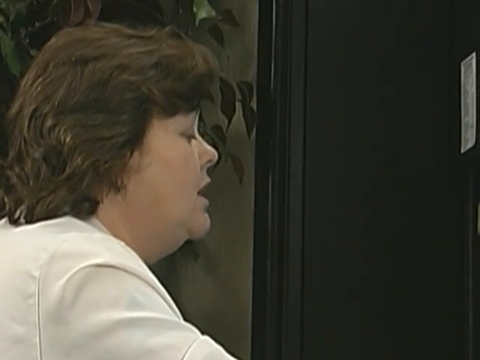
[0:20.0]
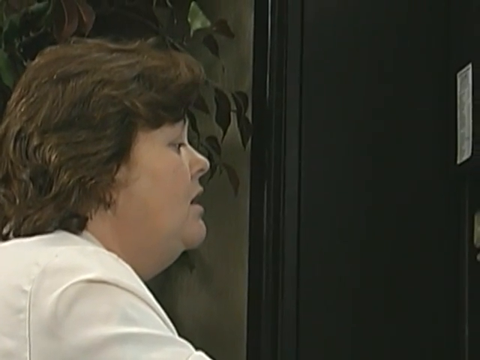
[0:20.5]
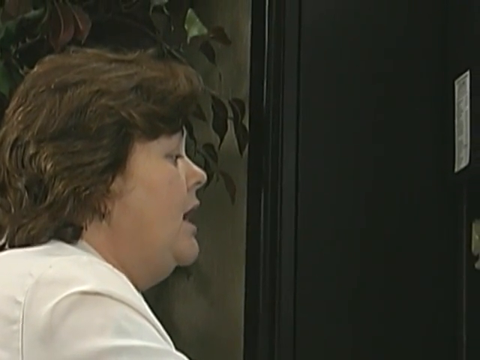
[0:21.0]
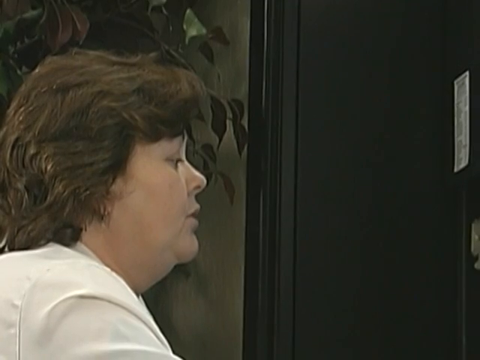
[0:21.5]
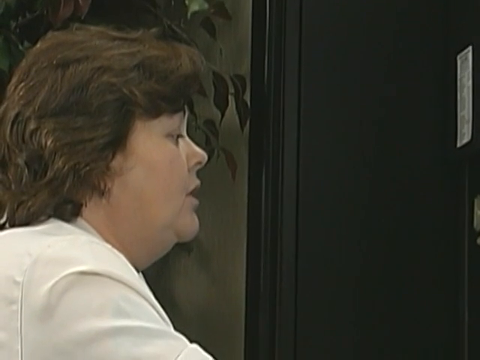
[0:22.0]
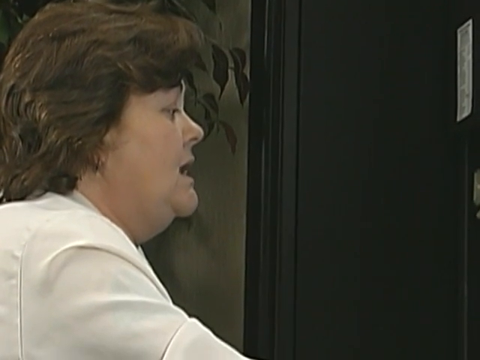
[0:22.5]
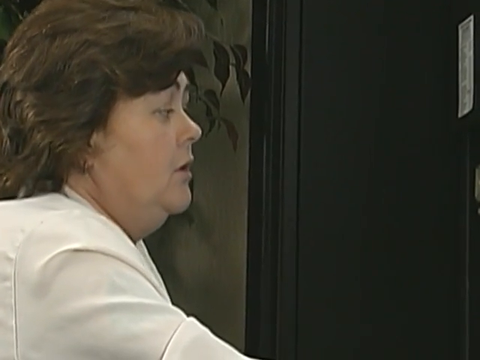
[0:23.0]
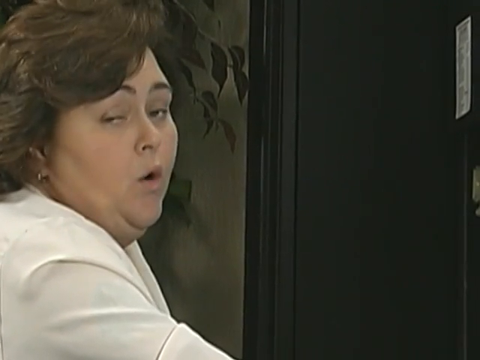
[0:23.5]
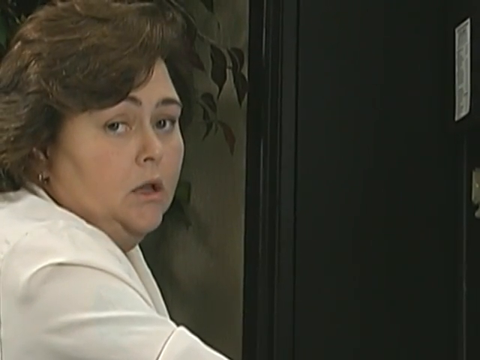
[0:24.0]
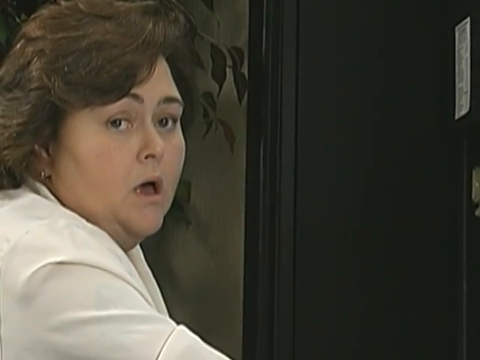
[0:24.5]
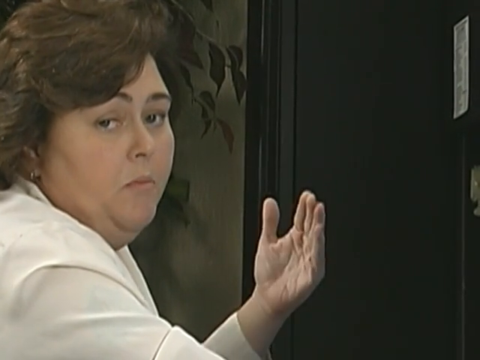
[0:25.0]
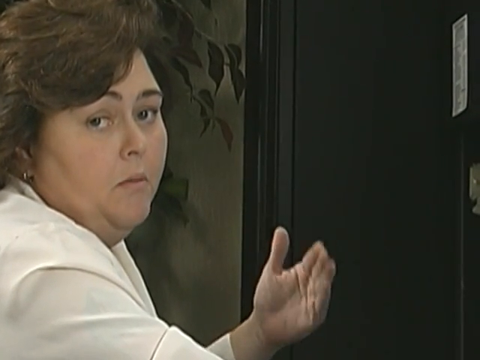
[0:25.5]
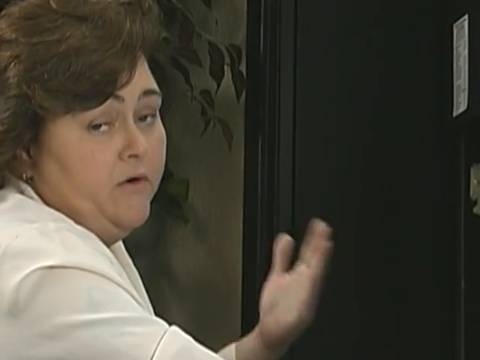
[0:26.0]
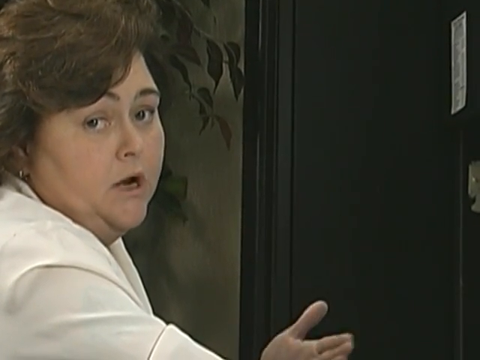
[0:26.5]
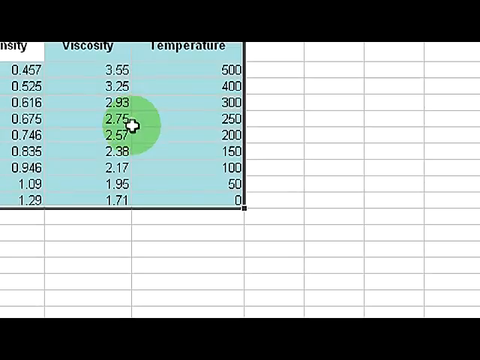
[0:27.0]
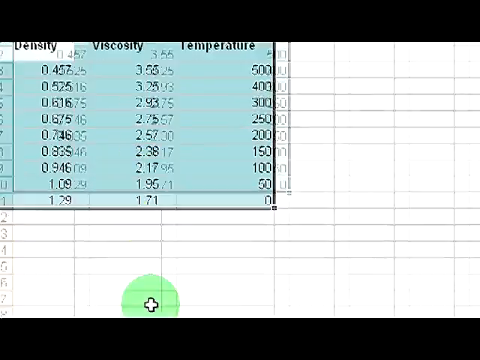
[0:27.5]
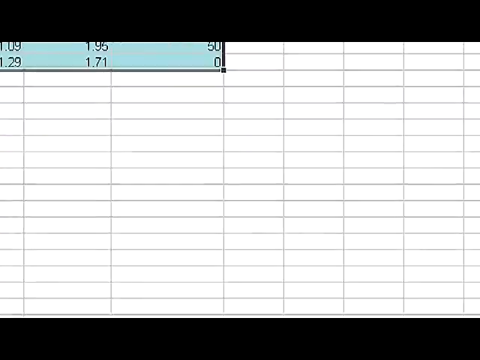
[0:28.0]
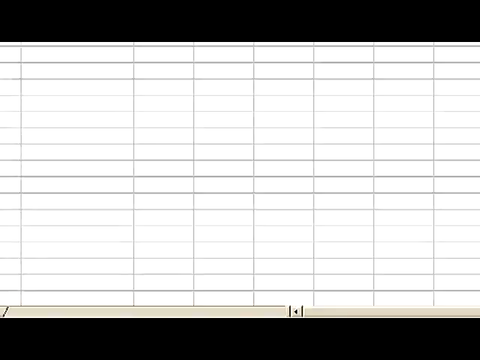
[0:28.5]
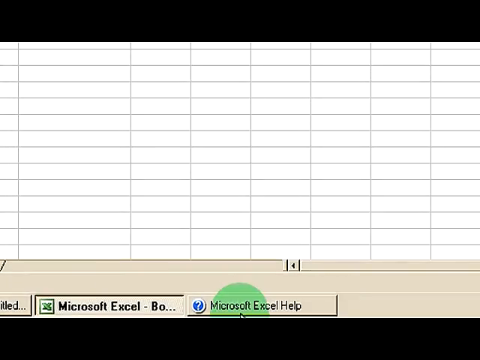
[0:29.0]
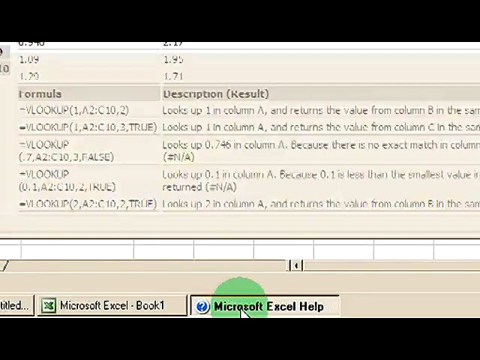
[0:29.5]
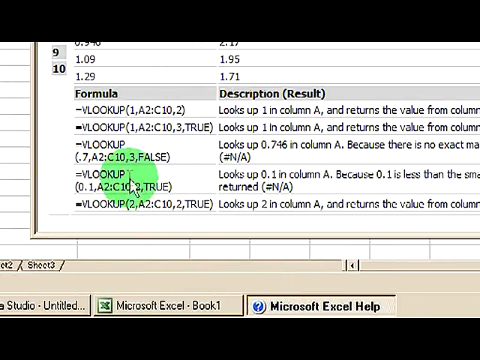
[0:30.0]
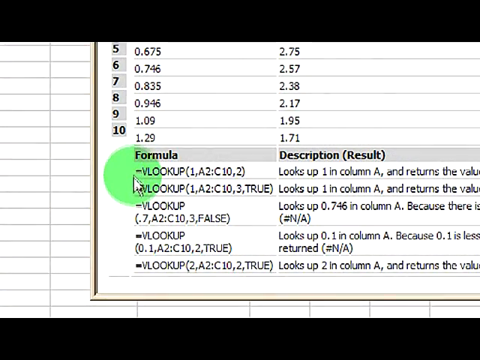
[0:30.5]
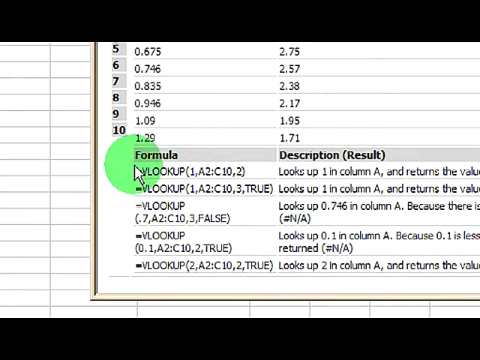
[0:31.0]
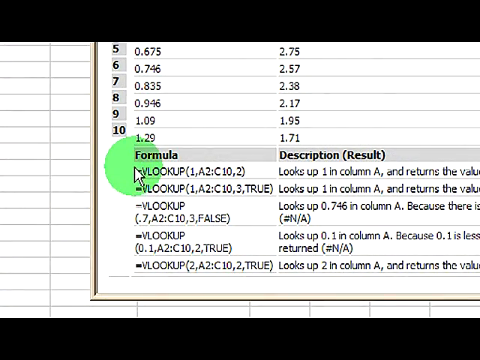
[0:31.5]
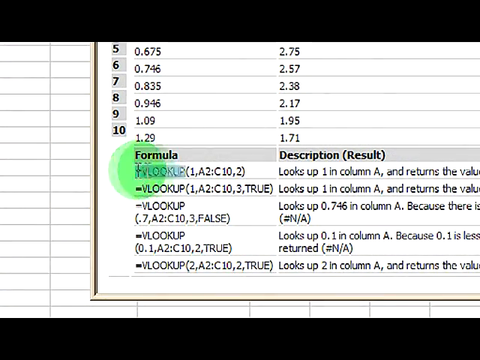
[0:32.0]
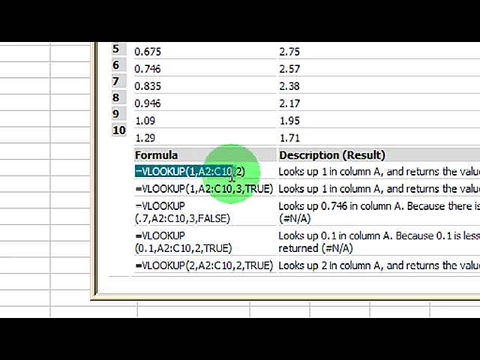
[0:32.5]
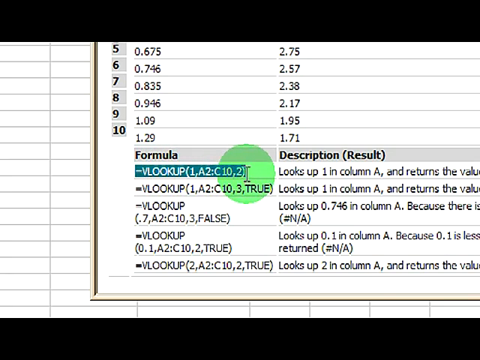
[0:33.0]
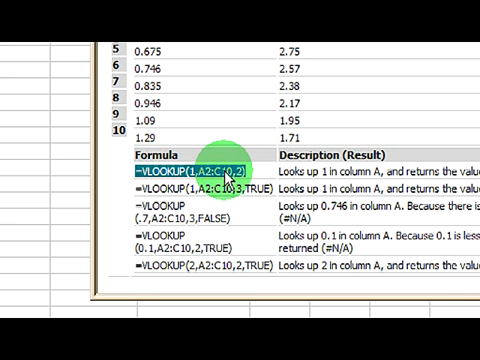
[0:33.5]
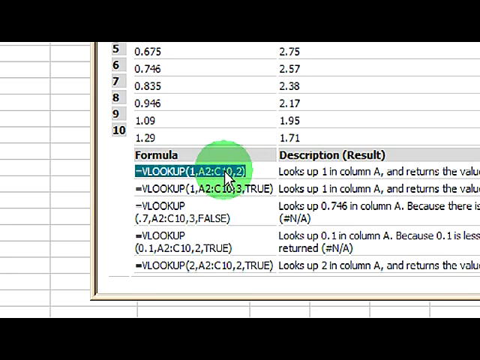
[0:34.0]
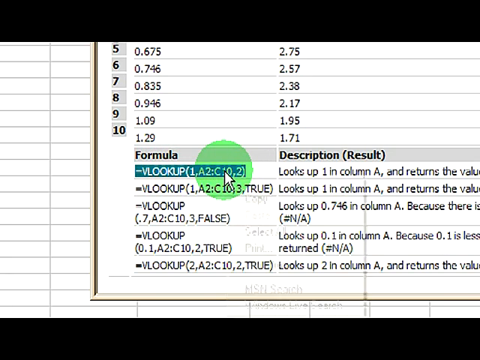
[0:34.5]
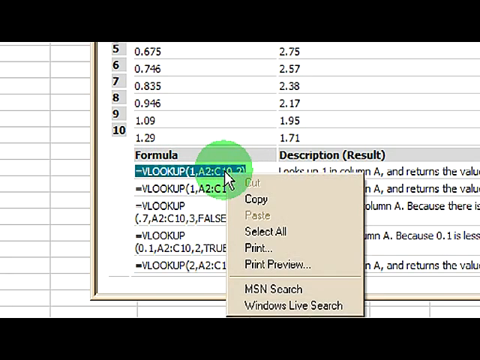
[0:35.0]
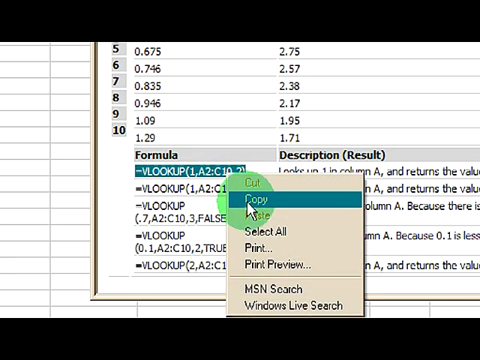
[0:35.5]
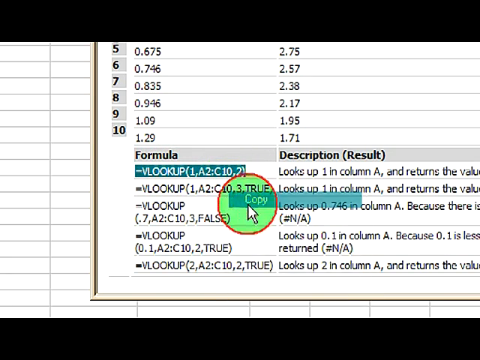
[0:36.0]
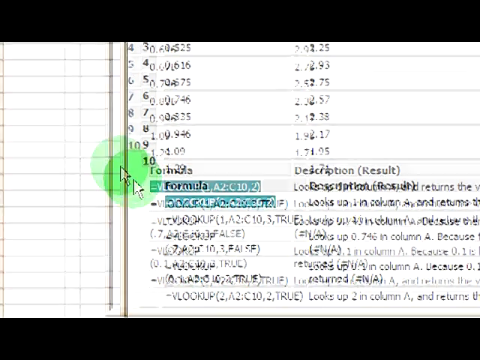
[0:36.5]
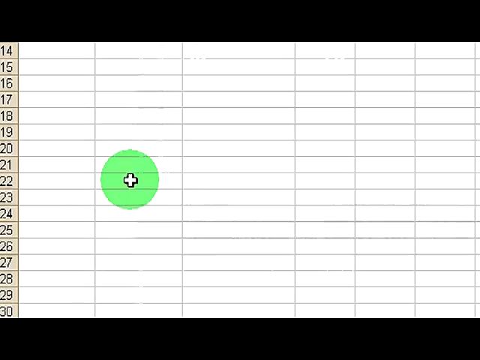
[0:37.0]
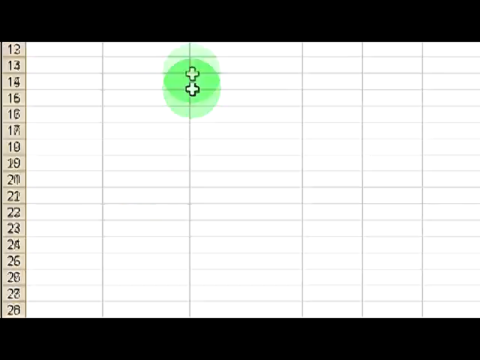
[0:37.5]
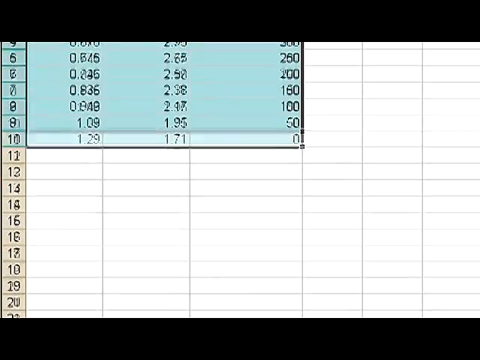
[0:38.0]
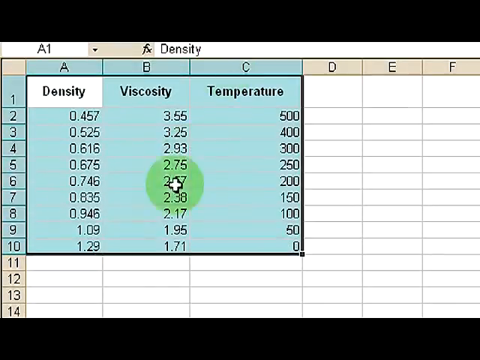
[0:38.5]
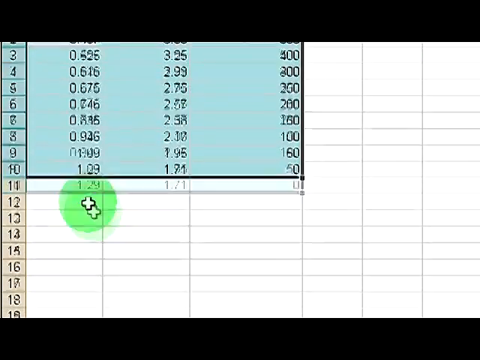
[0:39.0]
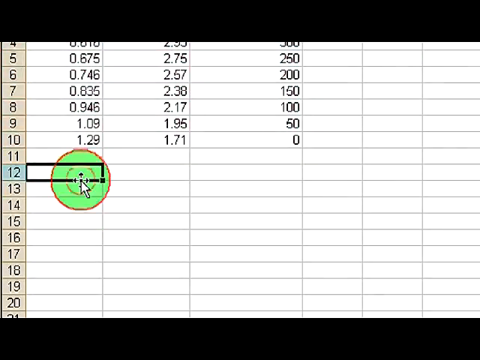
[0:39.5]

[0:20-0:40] The same woman is talking about the VLOOKUP function in Excel. She seems to be an instructor, possibly in a recording or possibly teaching a class. Judging from the version of Excel, the video was maybe recorded in the very early 2000s or late 1990s. While she speaks, she sometimes makes hand gestures with her left hand; her right hand is not visible. There is an indoor plant behind her. She wears a white jacket and has an old-fashioned haircut. She wears no makeup, or maybe very light makeup.